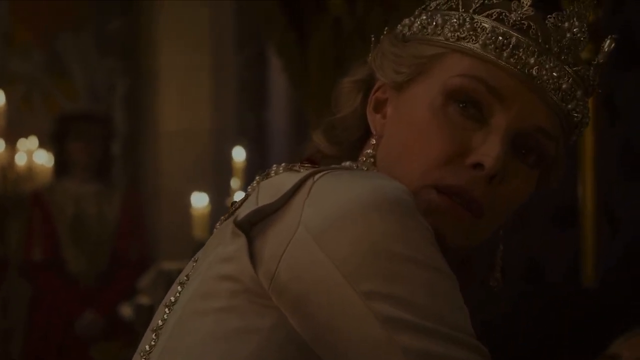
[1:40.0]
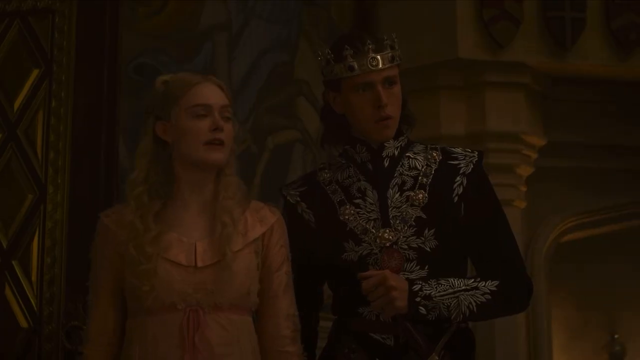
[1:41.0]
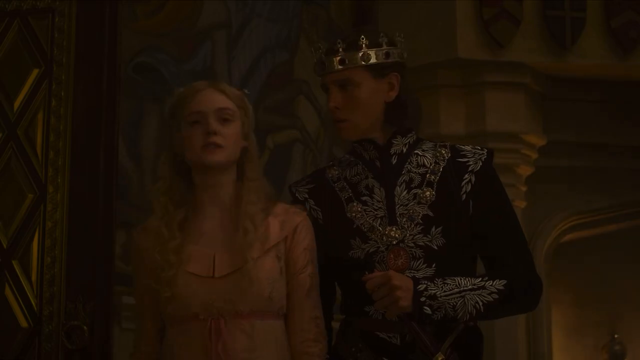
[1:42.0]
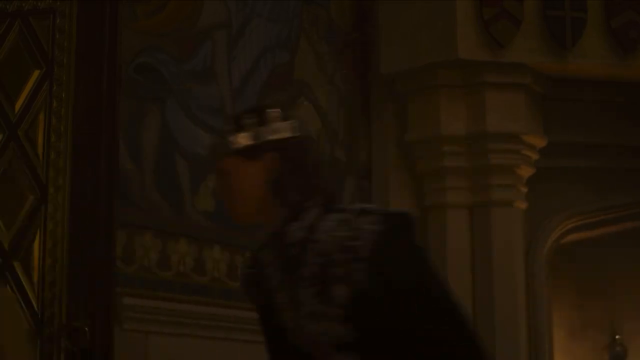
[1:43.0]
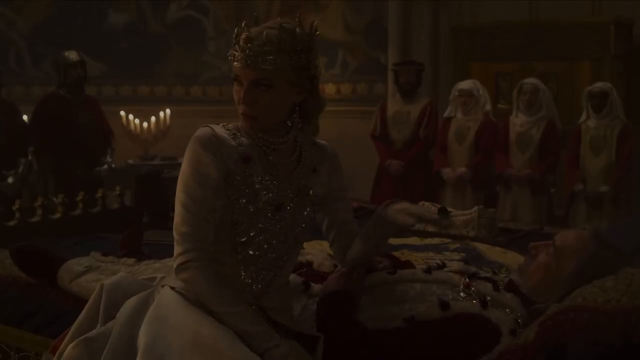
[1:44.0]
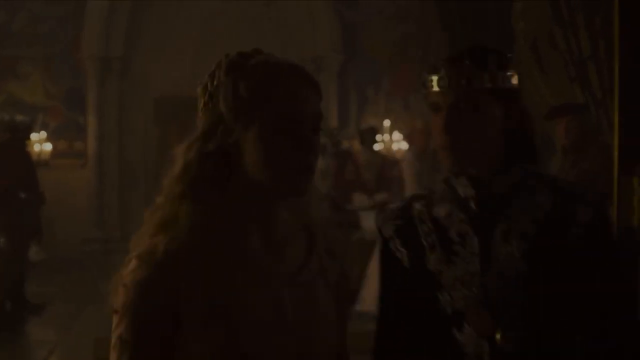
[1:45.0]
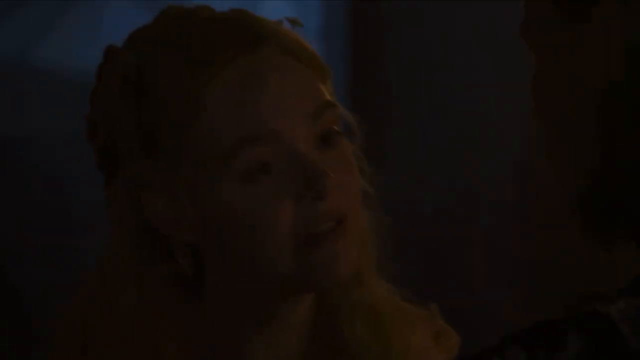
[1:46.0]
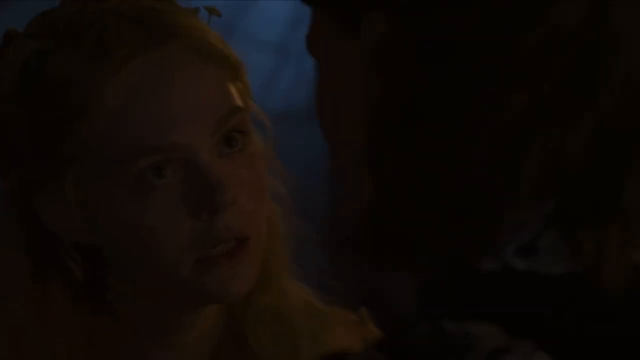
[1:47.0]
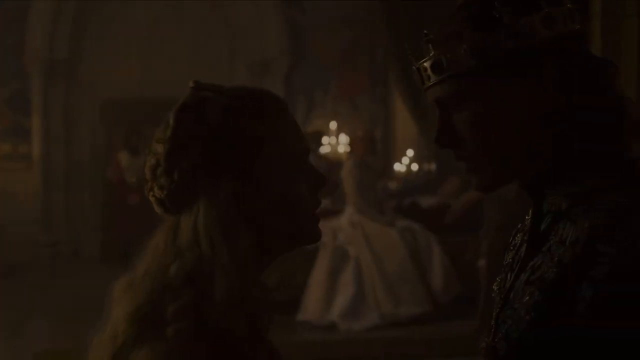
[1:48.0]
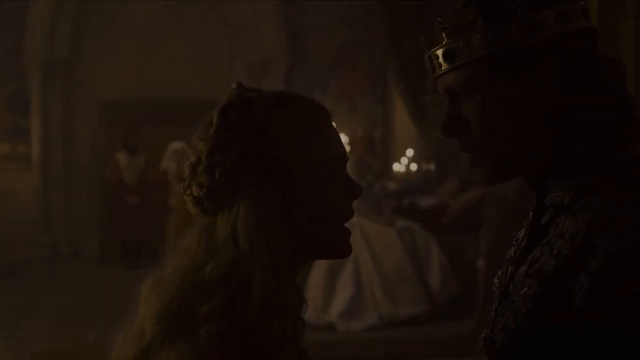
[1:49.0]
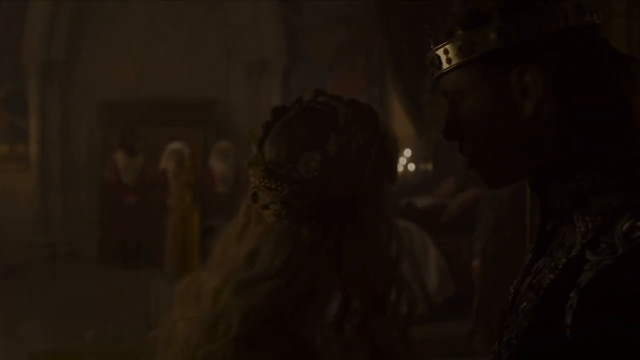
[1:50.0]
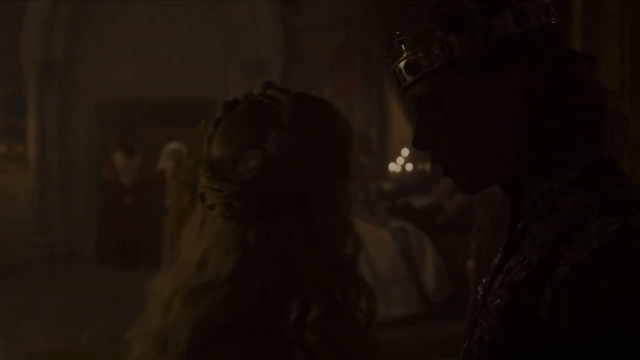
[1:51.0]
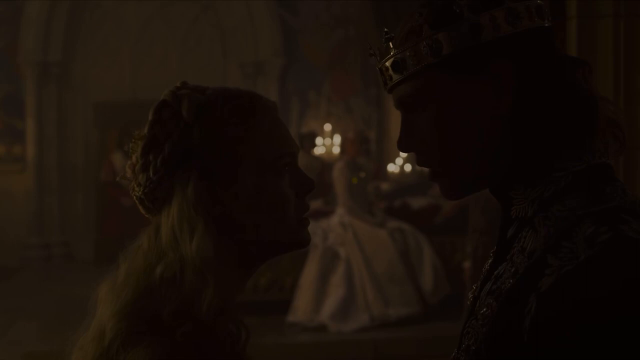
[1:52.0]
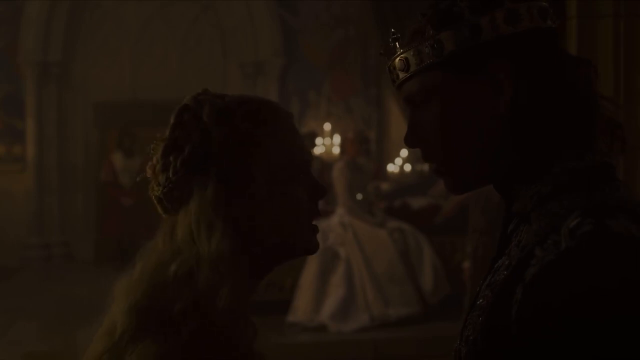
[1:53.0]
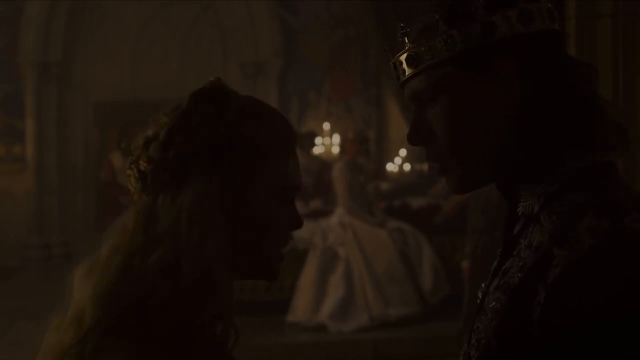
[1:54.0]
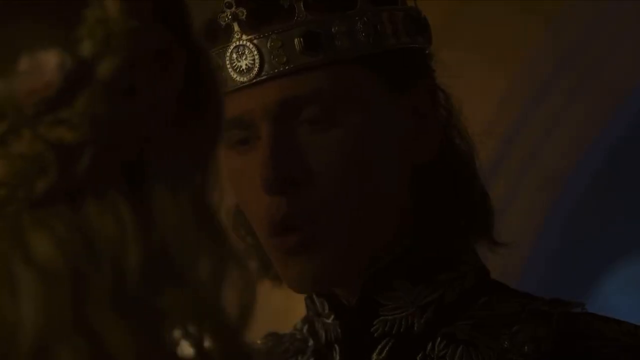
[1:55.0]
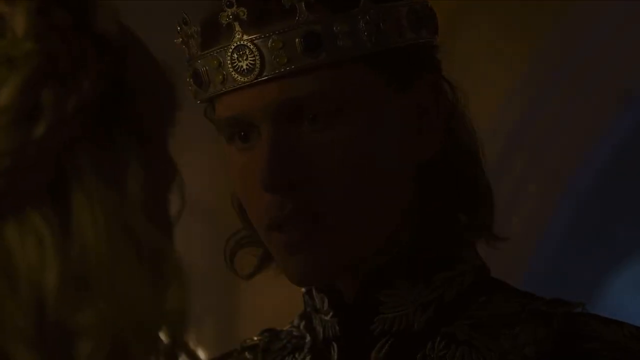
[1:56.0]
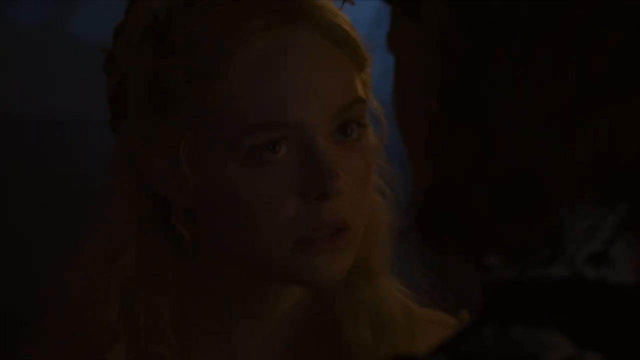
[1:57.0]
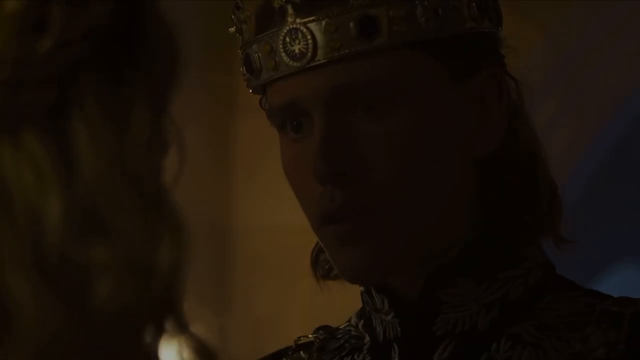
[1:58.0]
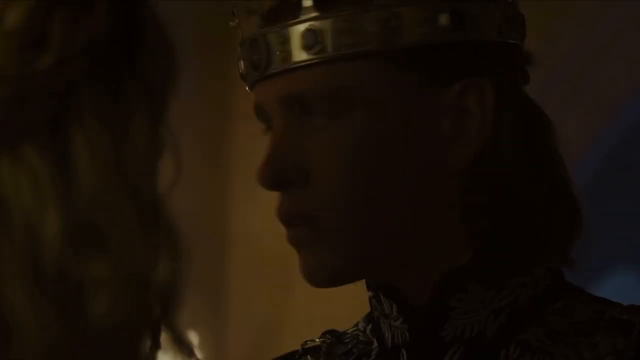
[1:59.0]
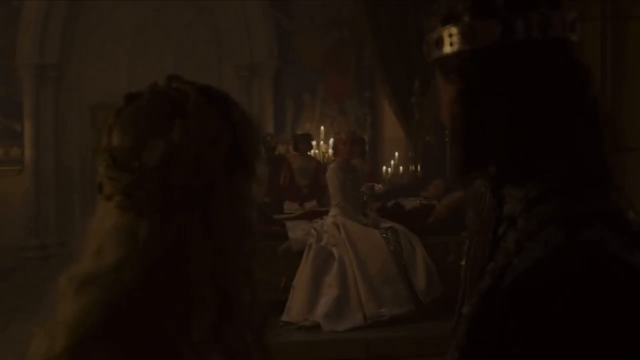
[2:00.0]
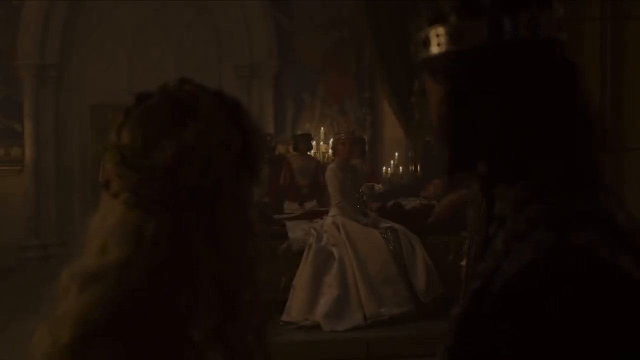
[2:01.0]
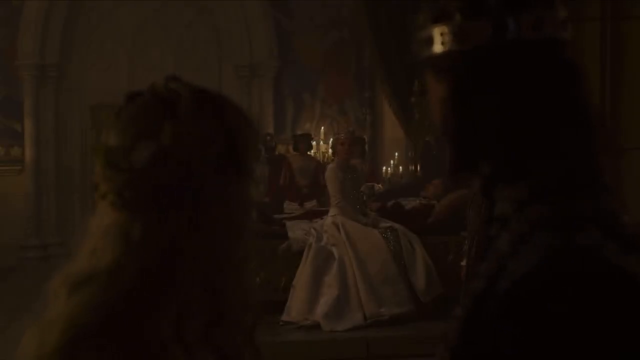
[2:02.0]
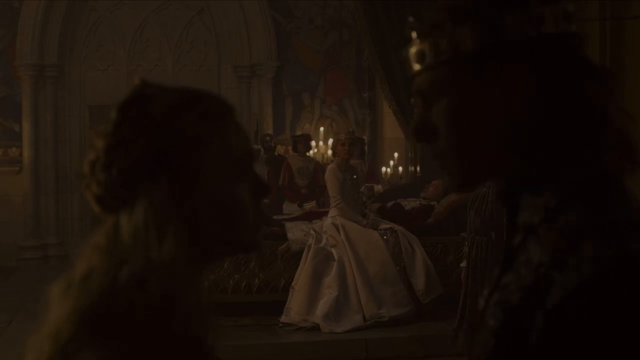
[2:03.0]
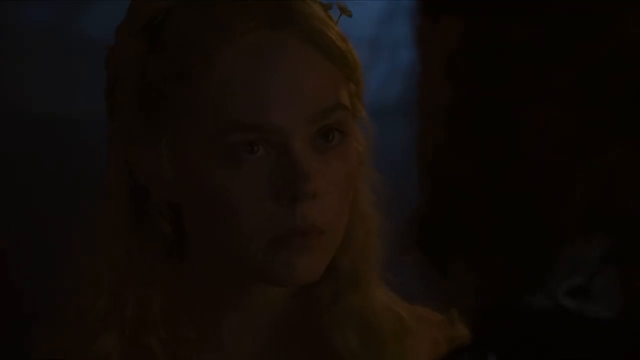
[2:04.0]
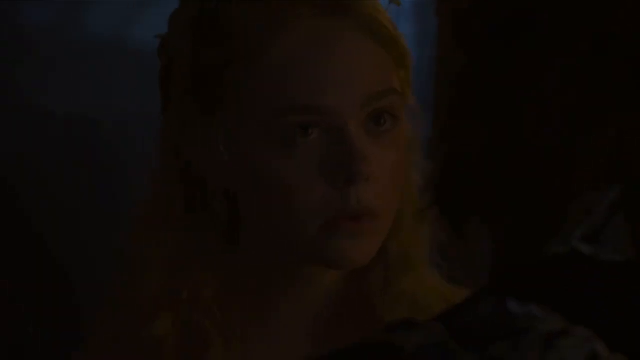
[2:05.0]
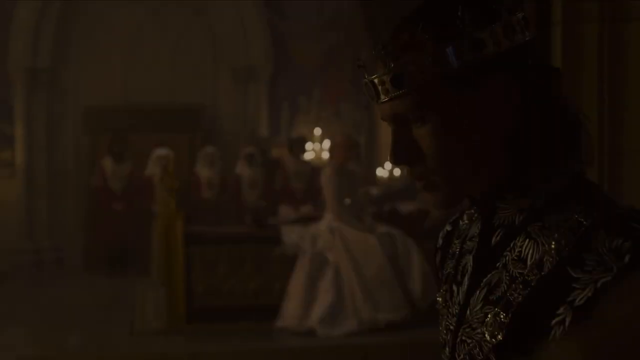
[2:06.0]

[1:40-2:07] The prince and the princess leave the scene. The princess is not happy about something, and the prince tries to talk to her and calm her down. She does not listen, speaks off and walks out on the prince, who stands in surprise and perplexity. Those in the palace still look uncertain whether the king will recover.